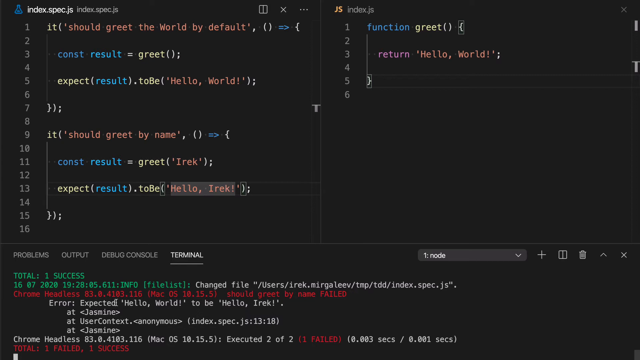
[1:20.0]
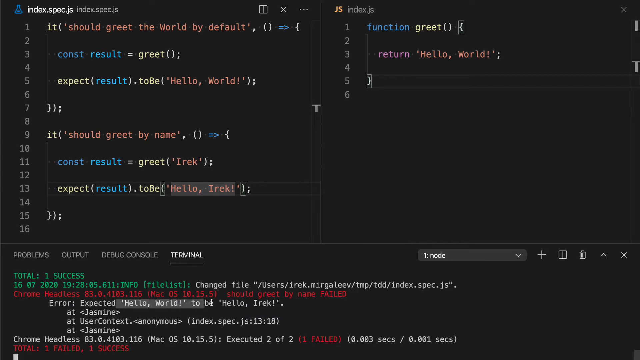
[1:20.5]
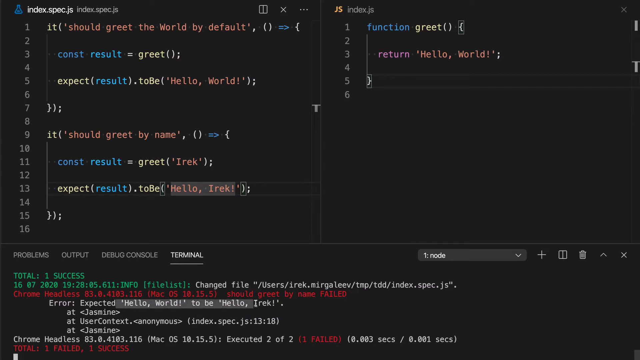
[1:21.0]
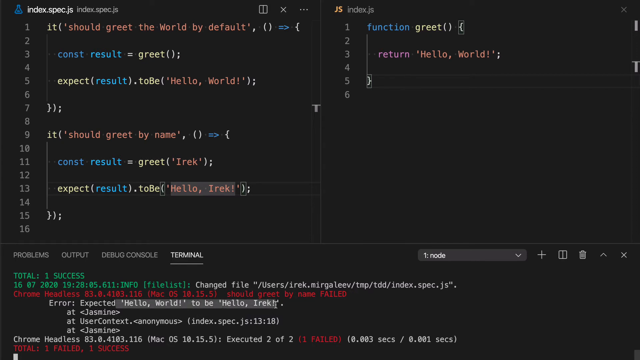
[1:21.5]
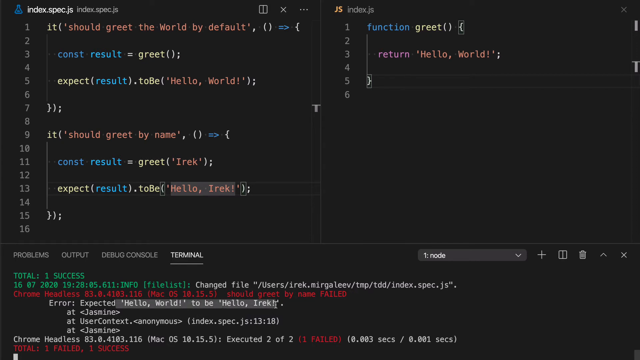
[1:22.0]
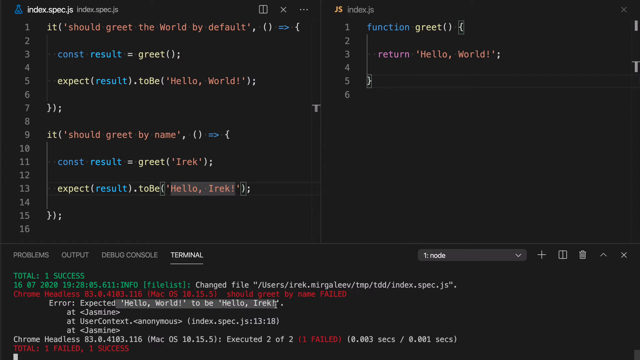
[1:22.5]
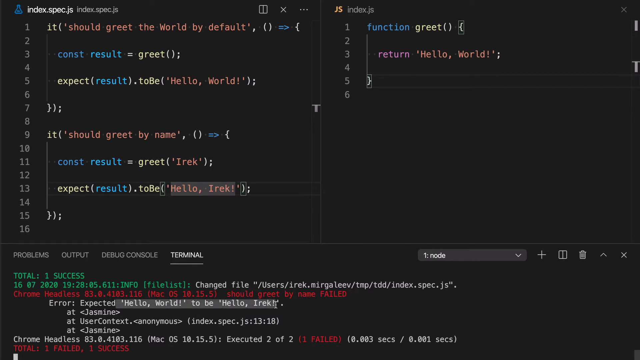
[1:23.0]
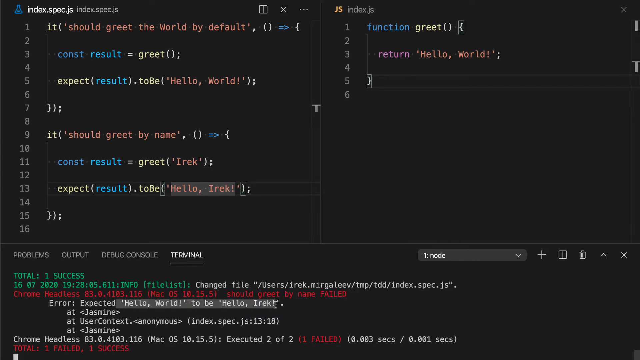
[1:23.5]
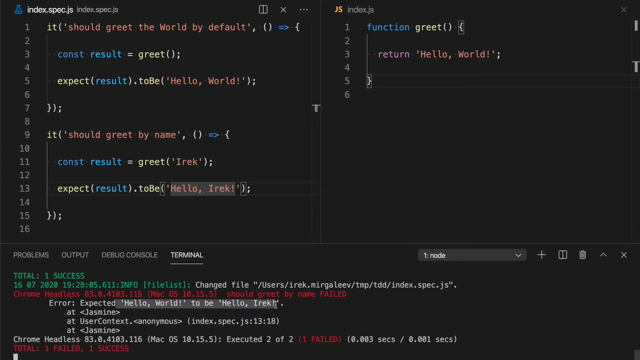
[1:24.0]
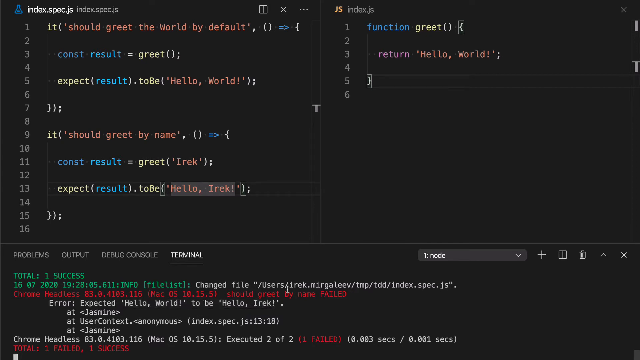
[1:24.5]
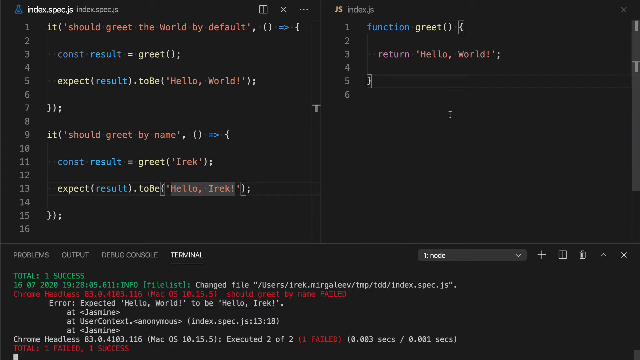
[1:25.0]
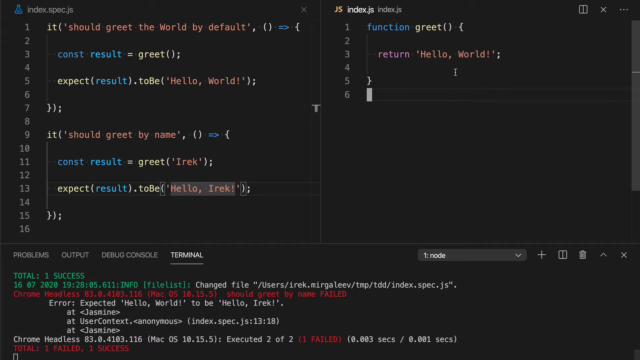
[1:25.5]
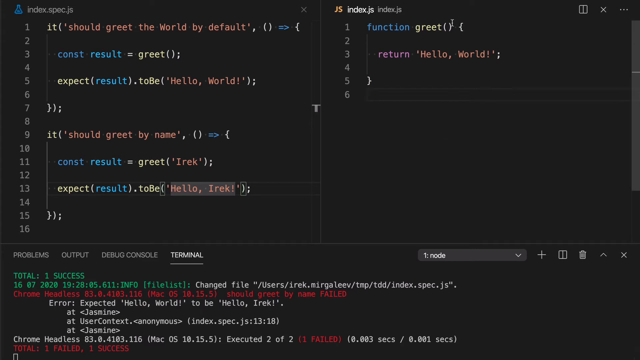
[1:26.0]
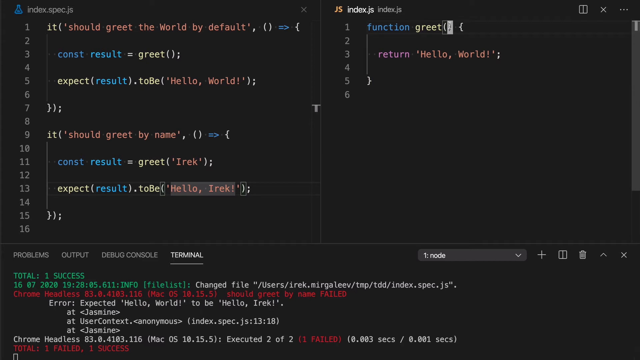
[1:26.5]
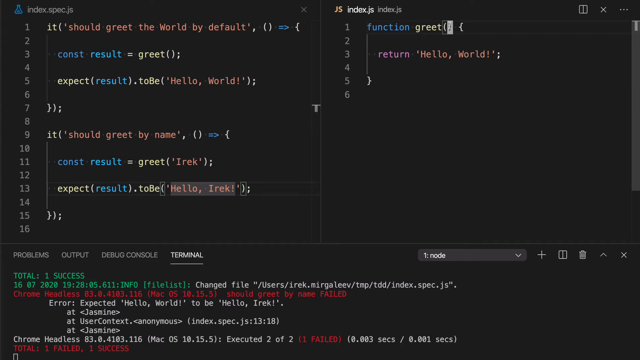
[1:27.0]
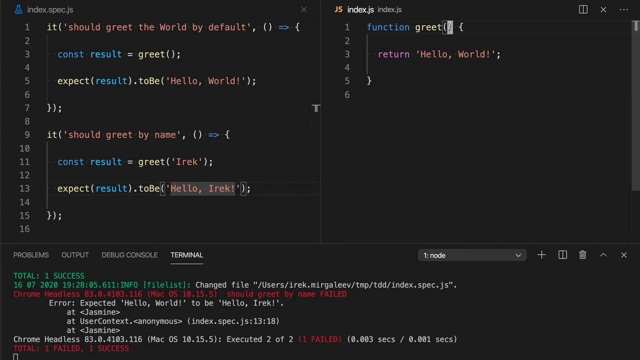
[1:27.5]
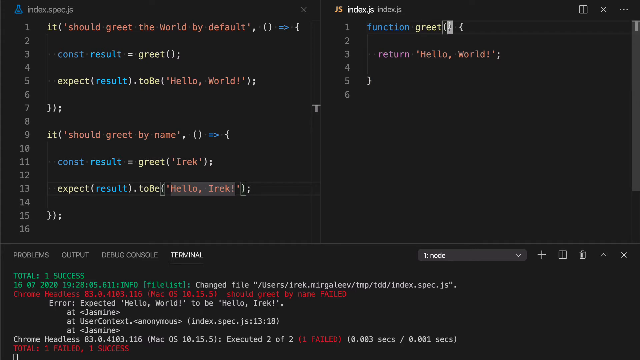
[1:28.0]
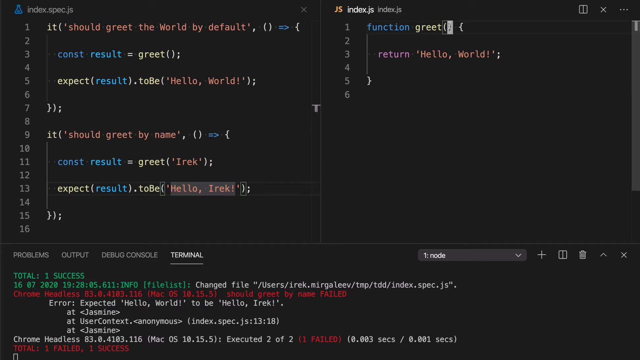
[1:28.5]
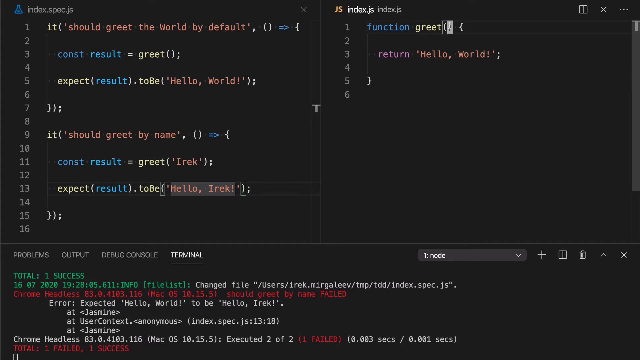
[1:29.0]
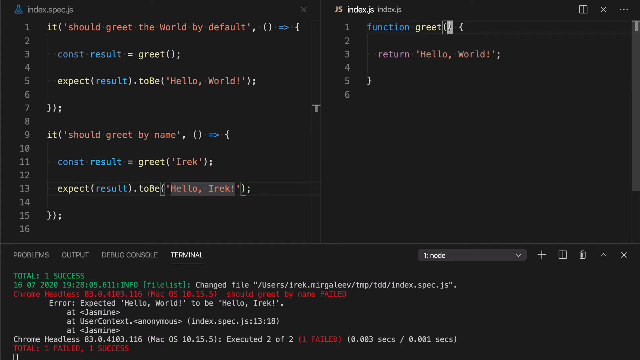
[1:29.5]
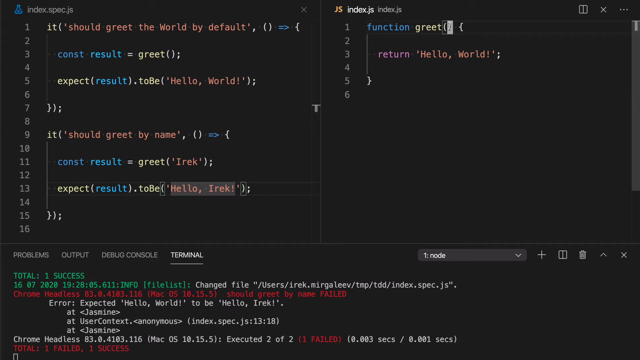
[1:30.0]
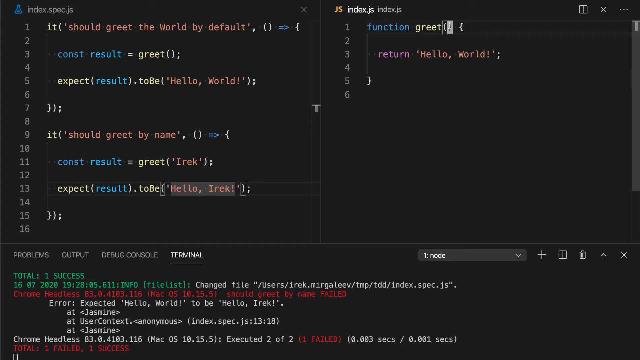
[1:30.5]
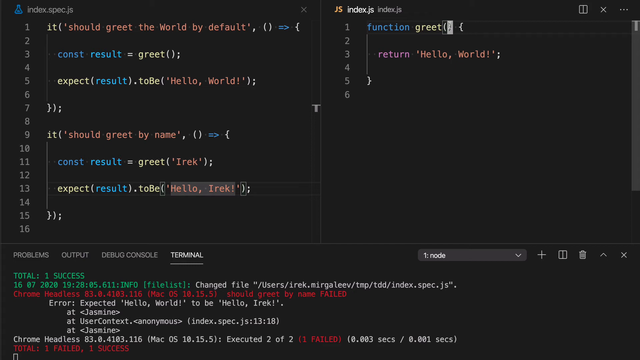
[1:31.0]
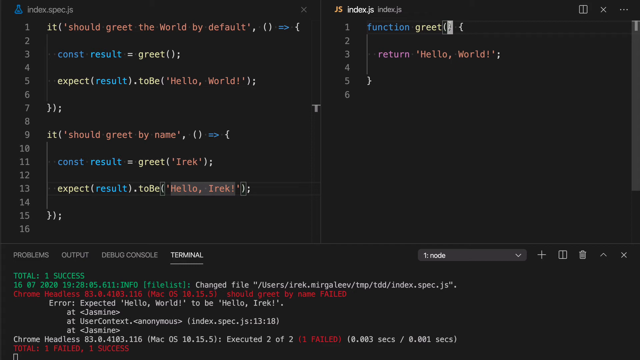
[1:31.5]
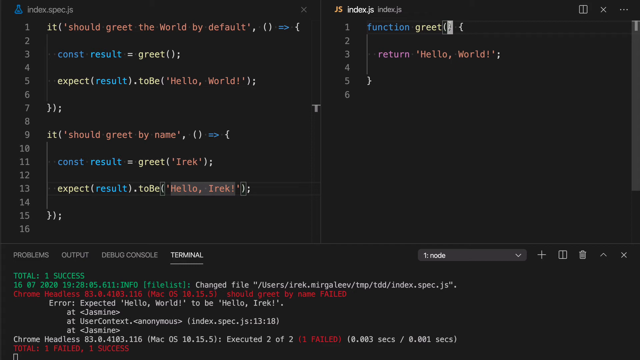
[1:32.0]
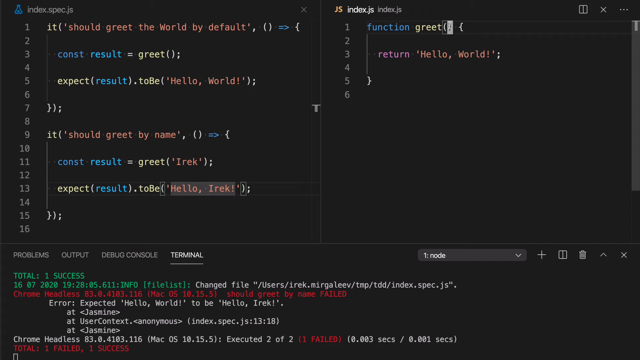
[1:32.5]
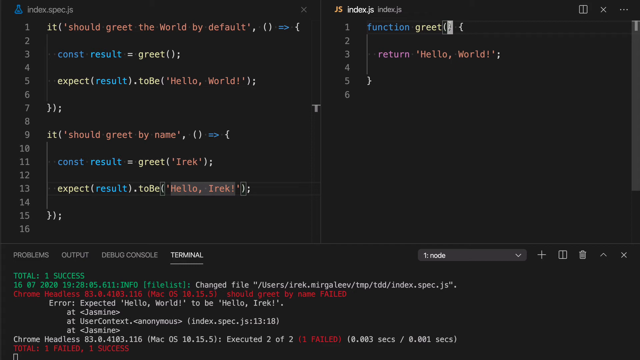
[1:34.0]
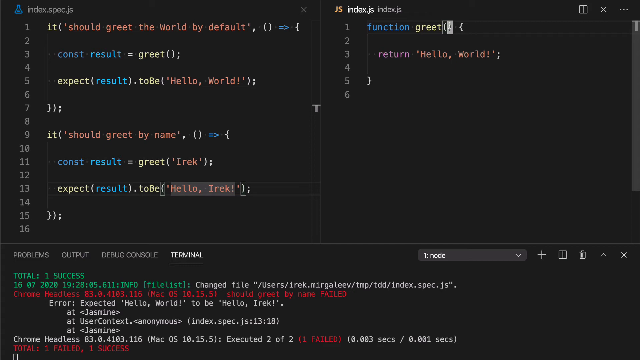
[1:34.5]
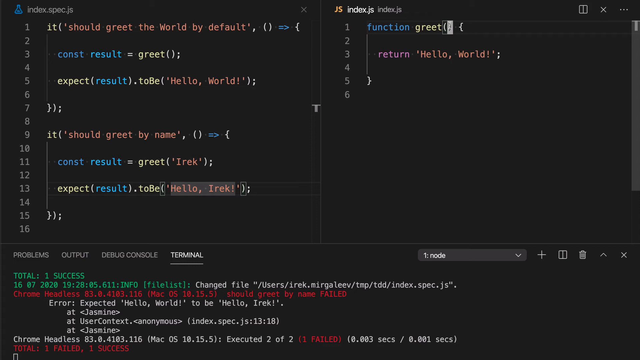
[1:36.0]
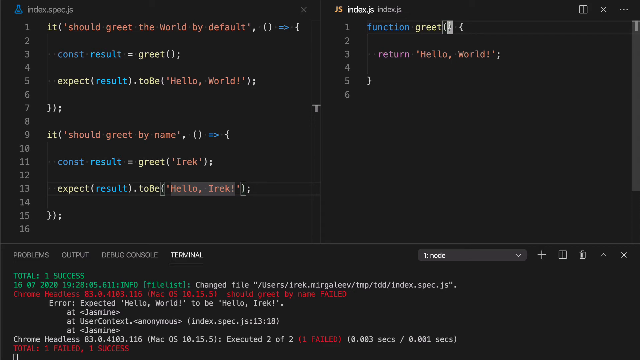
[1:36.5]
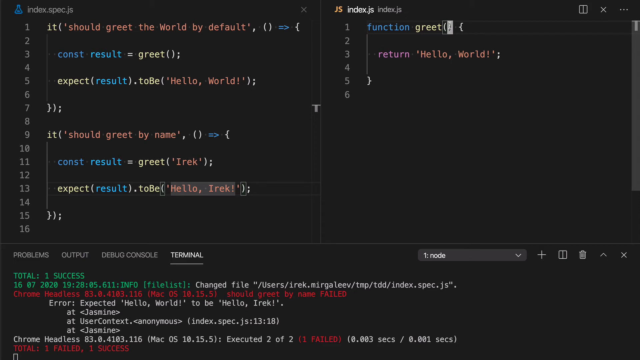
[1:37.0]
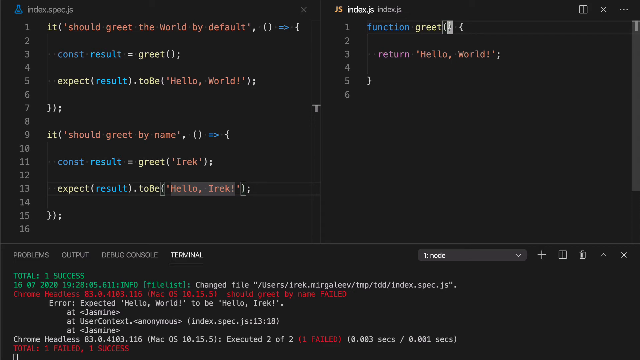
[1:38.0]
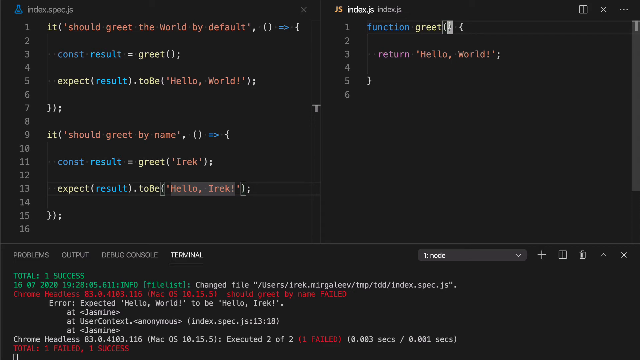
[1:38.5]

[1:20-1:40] The black screen shows programmed words including "construction result", "greet", "expect", "to be", "hello world", "greet the world by default", "should greet by name" and "IREK". Something is highlighted at the bottom: "hello world to be hello IREK". On the right side of the screen are "function greet" with parentheses and "hello world". "terminal" is still underlined in white, while "debug console", "output" and "problems" are not. Letters, numbers and words appear in blues, yellows, slight reds, a little green and some deep reds. "modes" is in white, and what looks like a trash can symbol is in the lower right part of the screen. "expect result to be hello IREK" is highlighted, the highlight showing as white.